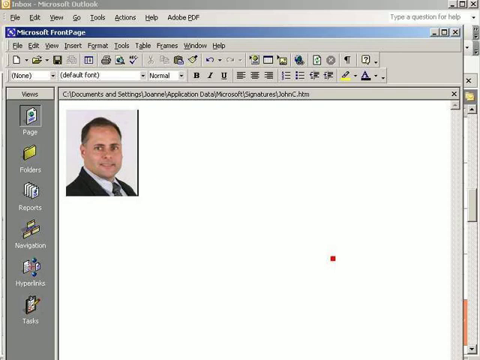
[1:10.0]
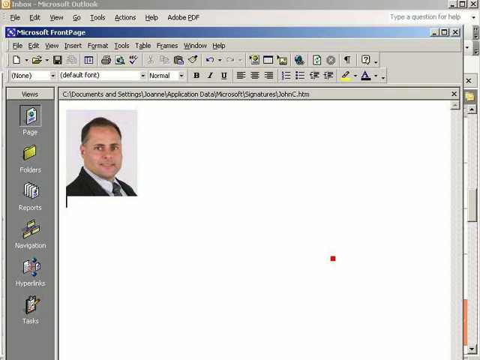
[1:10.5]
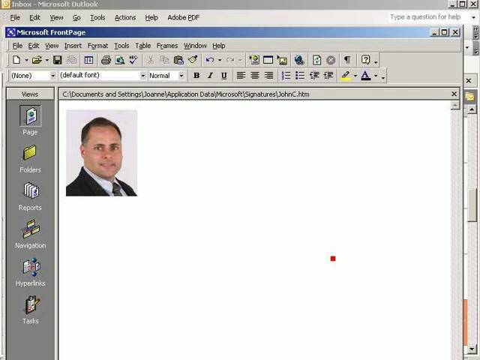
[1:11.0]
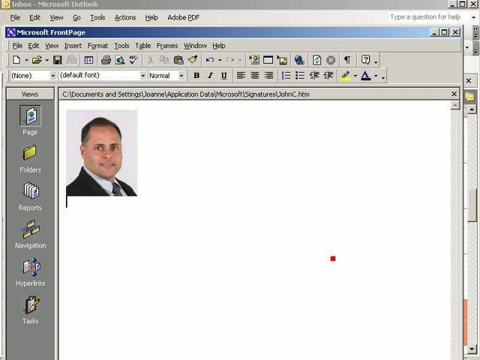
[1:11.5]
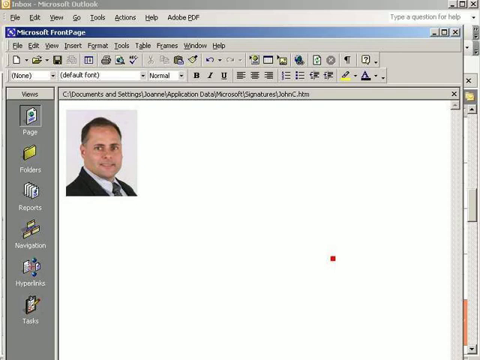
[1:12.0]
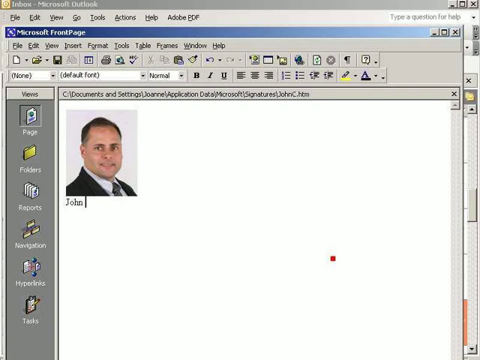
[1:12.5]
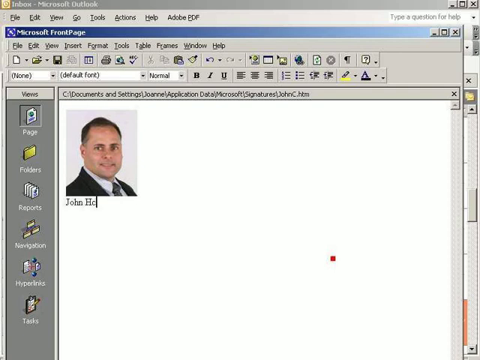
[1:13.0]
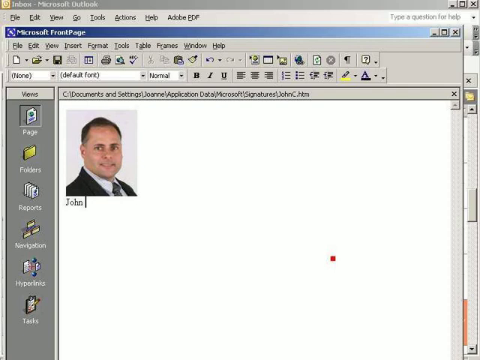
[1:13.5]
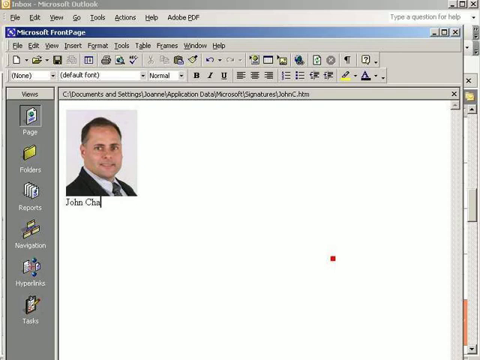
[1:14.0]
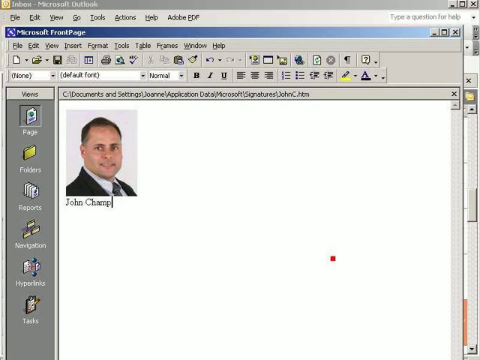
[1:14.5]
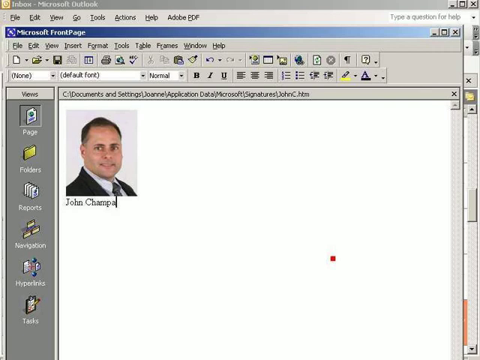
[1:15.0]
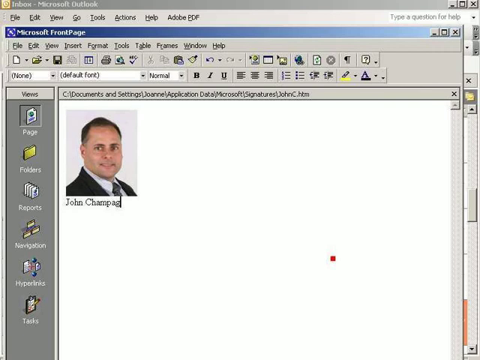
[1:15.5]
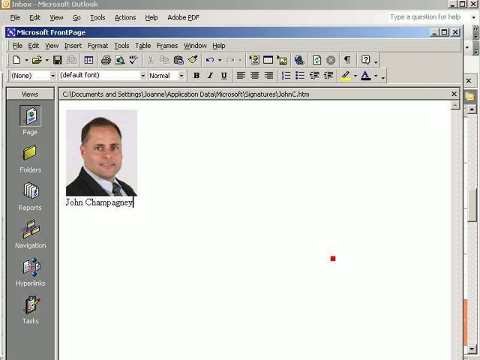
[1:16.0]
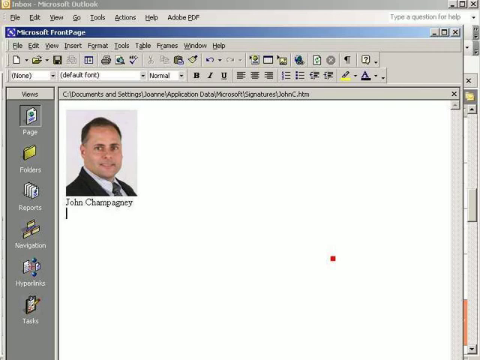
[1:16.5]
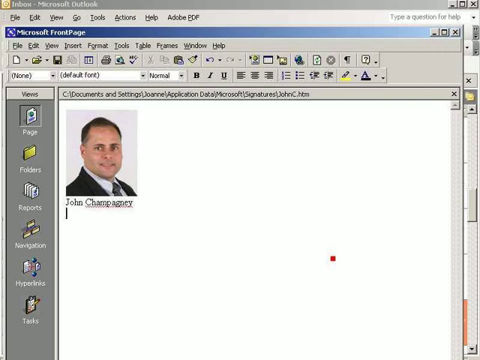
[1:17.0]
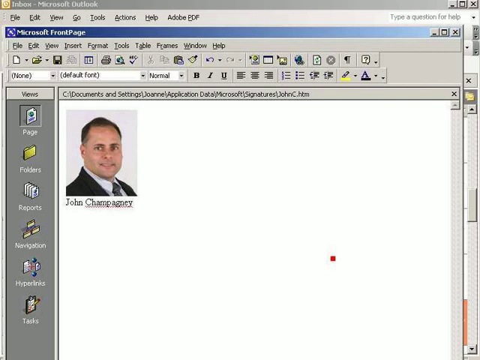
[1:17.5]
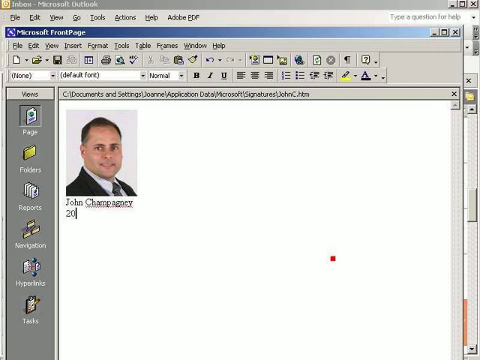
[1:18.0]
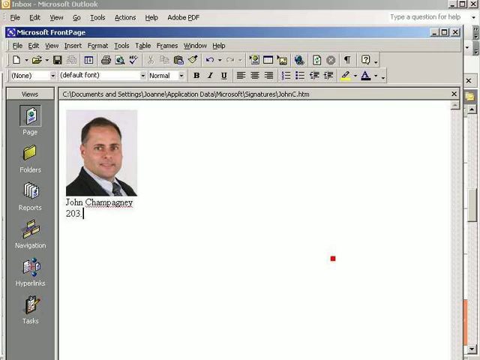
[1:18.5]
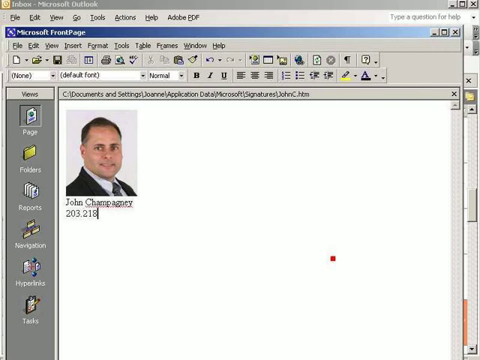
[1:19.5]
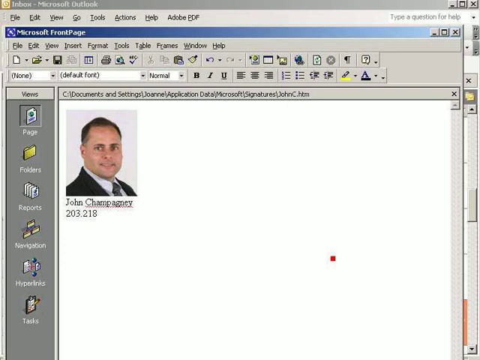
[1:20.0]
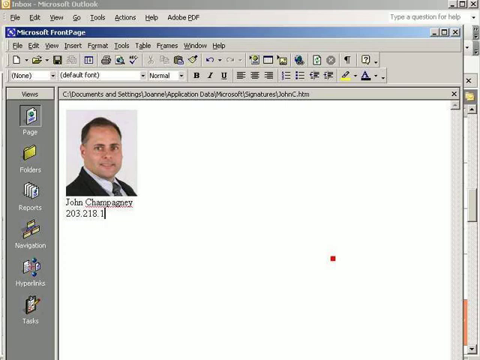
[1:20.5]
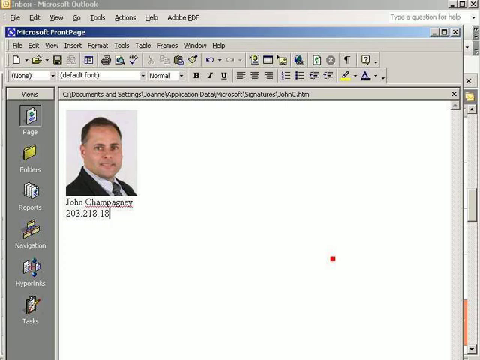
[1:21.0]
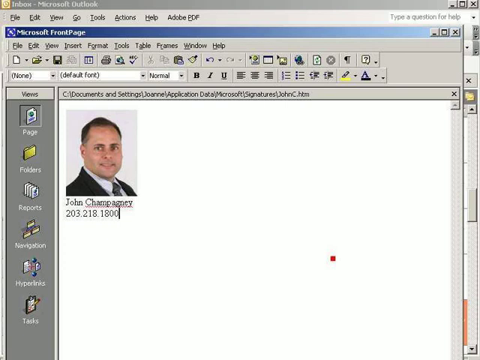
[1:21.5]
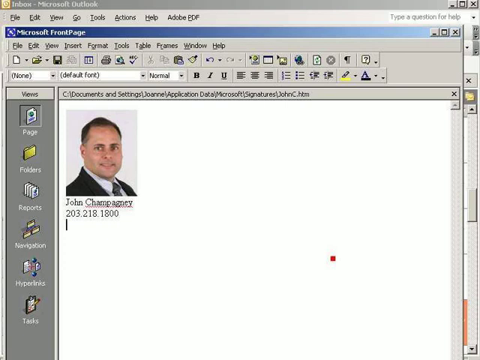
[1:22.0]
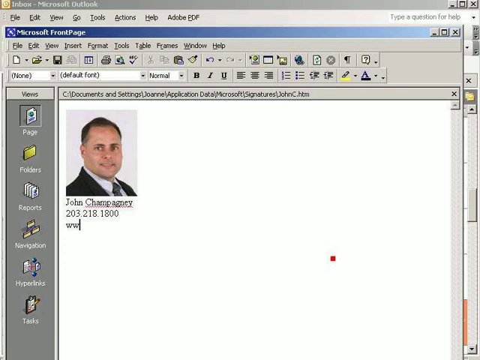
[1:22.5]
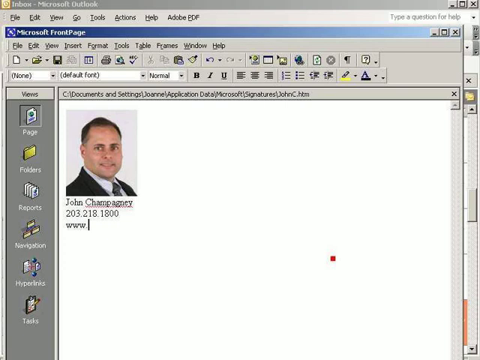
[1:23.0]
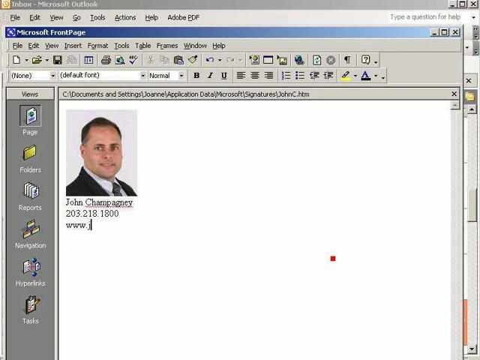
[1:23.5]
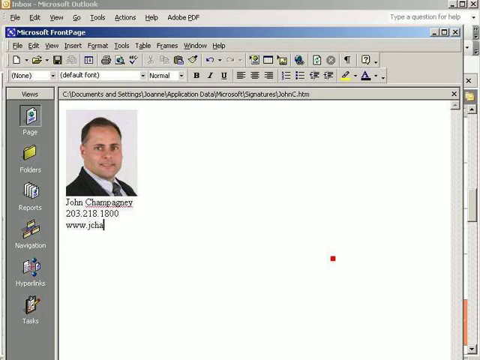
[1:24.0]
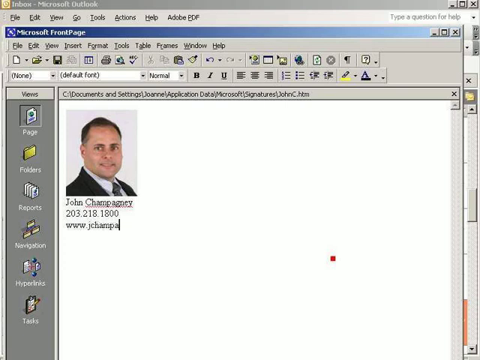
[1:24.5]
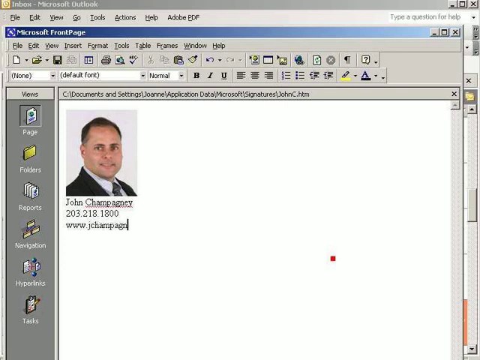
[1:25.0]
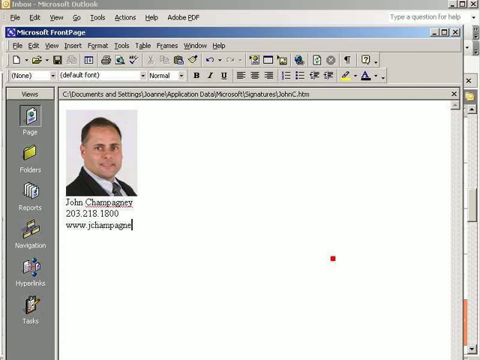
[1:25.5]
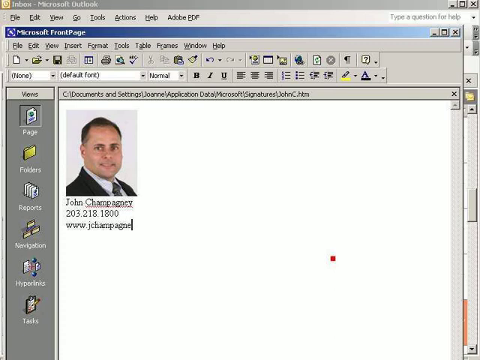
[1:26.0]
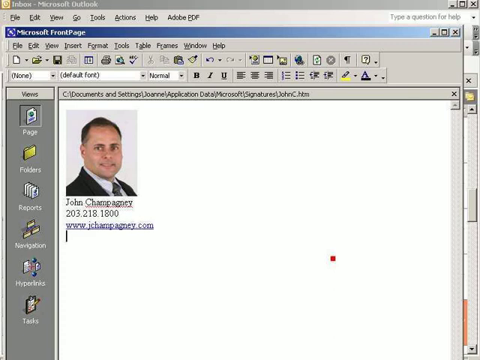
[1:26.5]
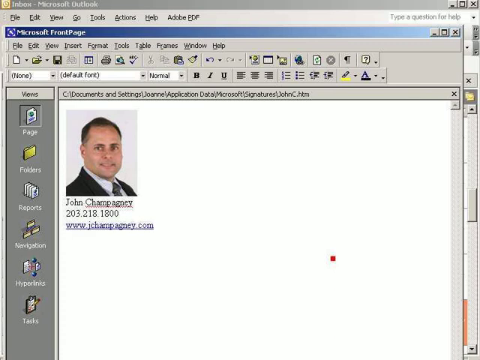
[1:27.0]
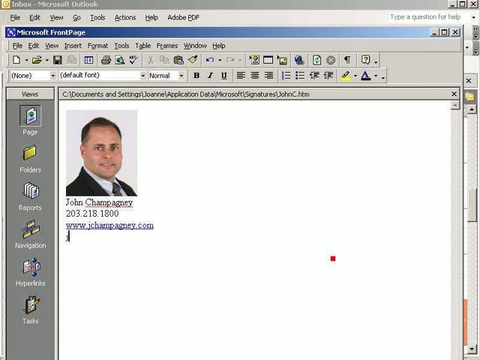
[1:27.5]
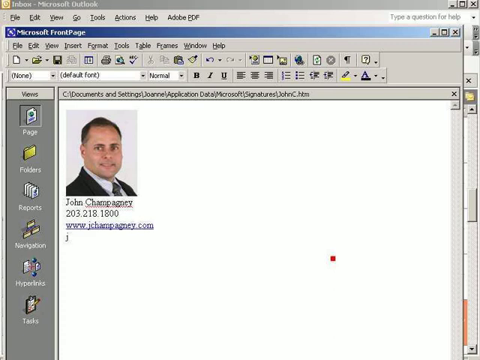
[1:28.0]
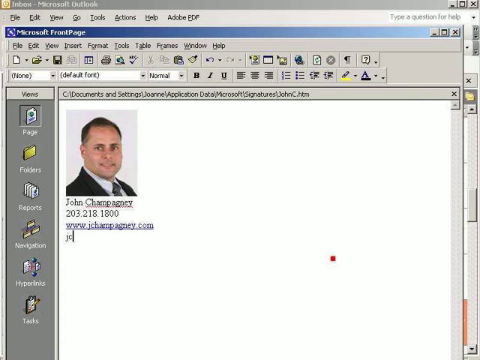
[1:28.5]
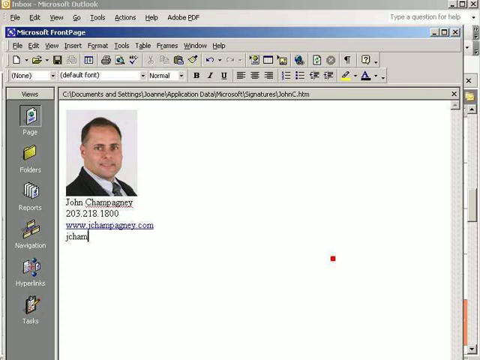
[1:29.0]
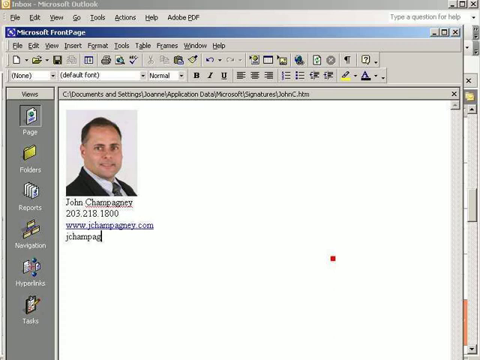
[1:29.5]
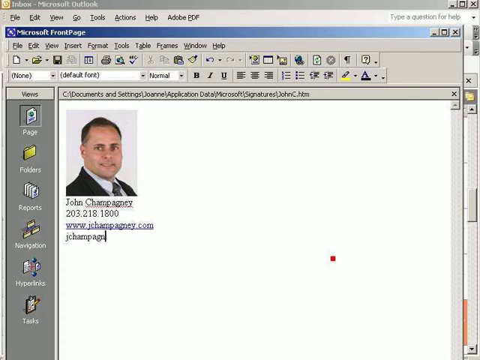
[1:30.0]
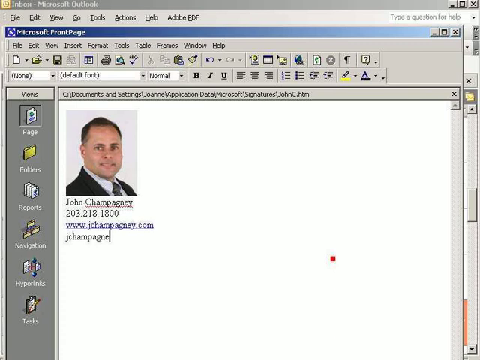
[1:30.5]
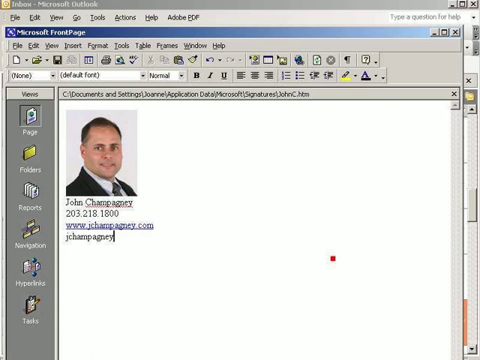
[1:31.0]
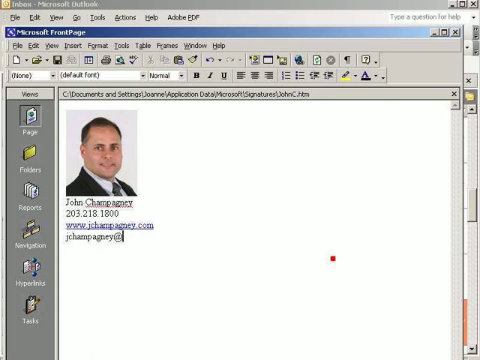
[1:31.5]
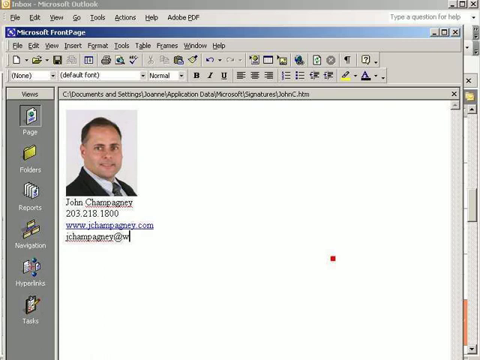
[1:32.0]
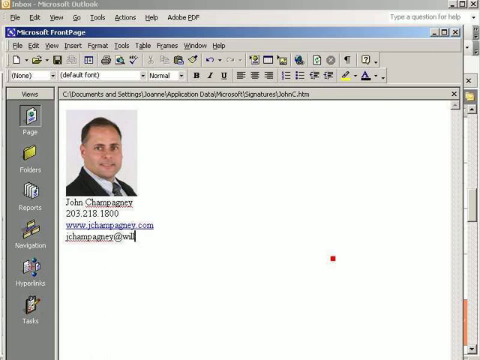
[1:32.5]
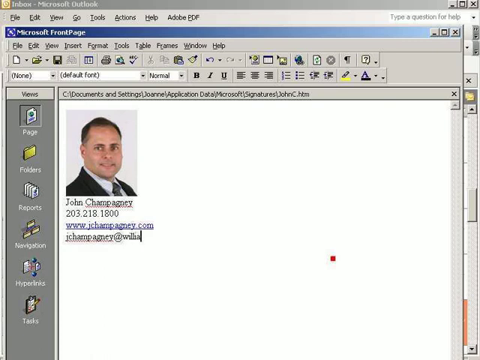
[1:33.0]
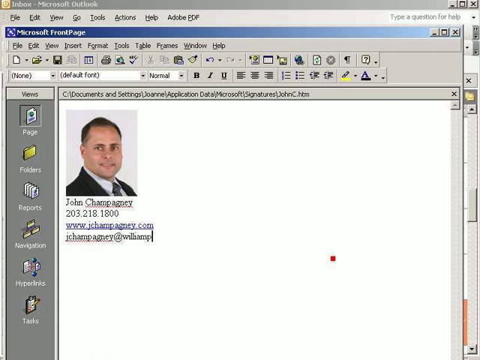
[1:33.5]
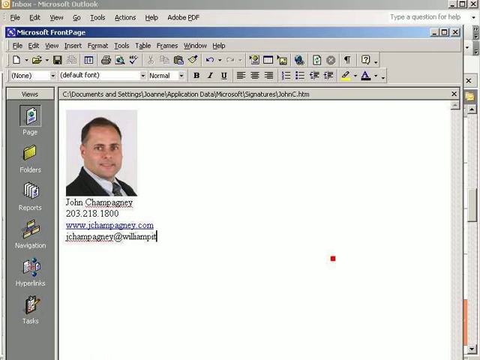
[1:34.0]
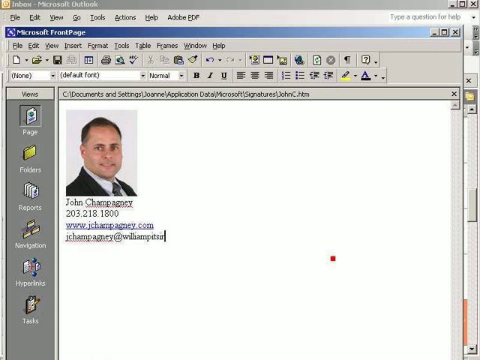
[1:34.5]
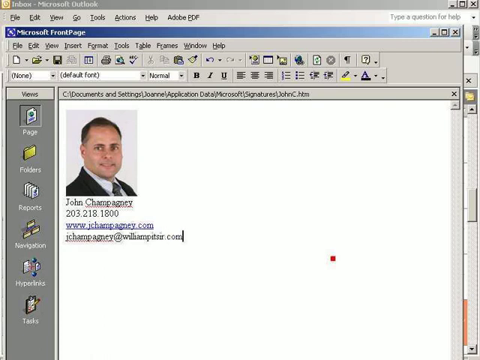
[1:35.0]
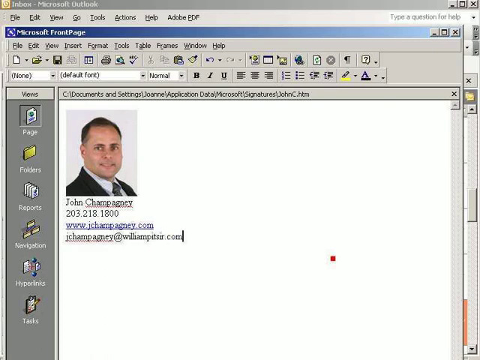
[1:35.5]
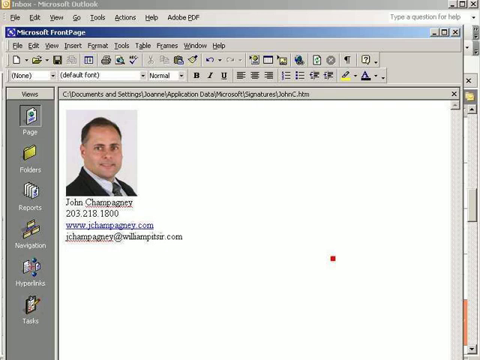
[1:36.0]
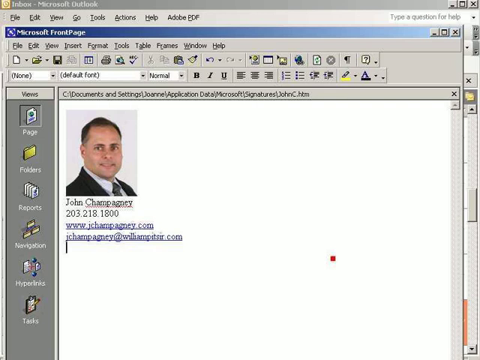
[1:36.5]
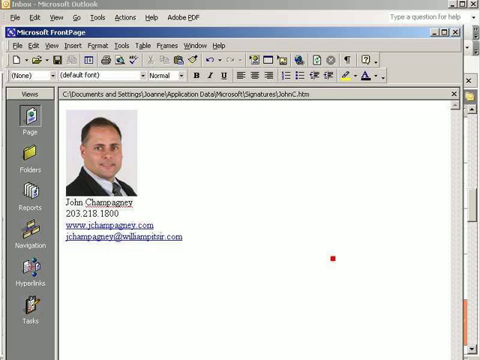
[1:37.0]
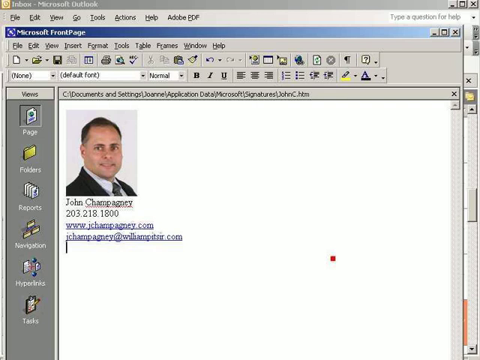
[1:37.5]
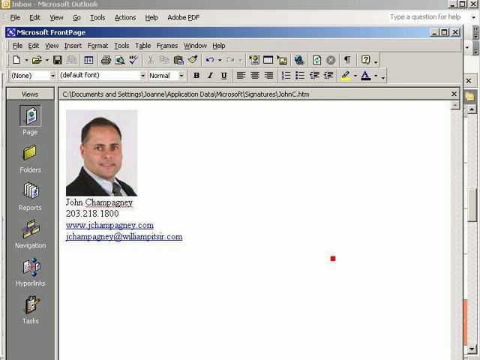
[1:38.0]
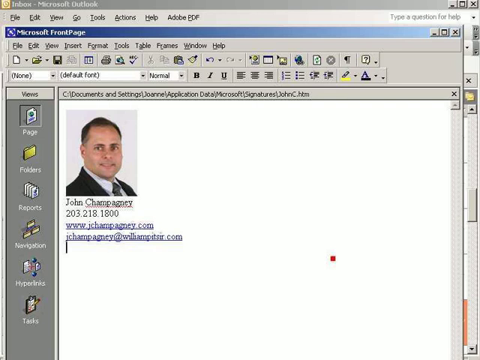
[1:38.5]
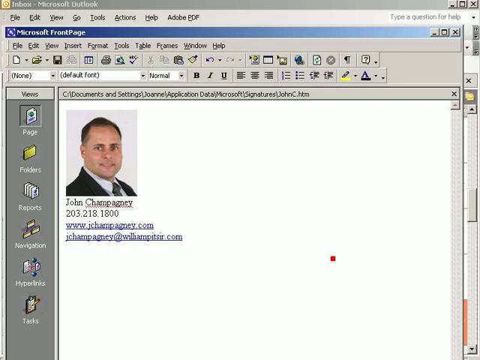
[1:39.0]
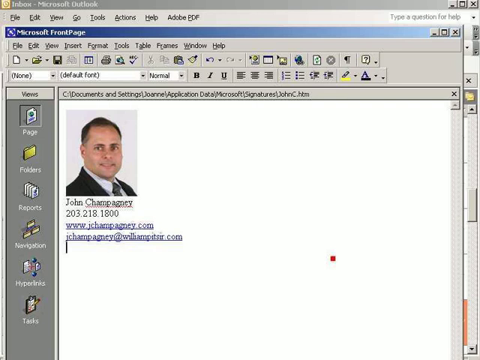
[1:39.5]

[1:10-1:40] The business headshot of the man is now added to the signature, and underneath it the user types the rest of the signature: first the name John Champagney, then the phone number 203-218-1800, then the website www.jchampagny.com, and finally the email address jchampagny@williampitzer.com. The signature ends up completed.